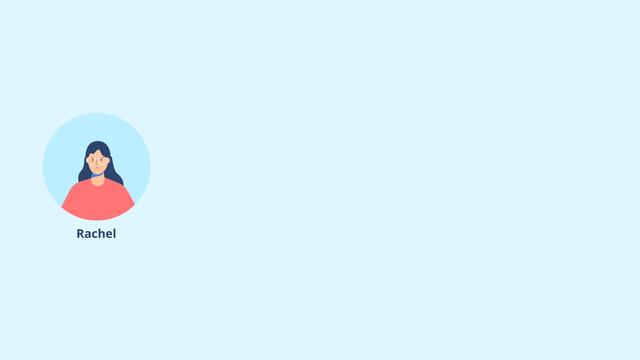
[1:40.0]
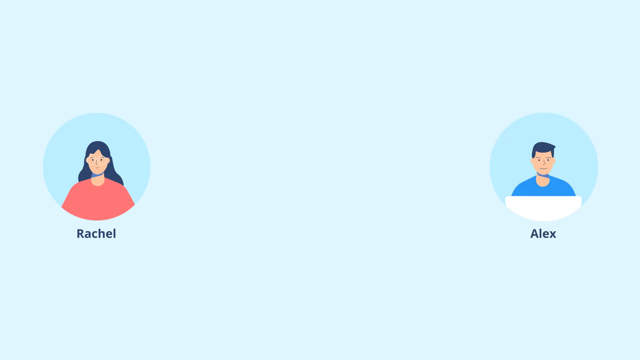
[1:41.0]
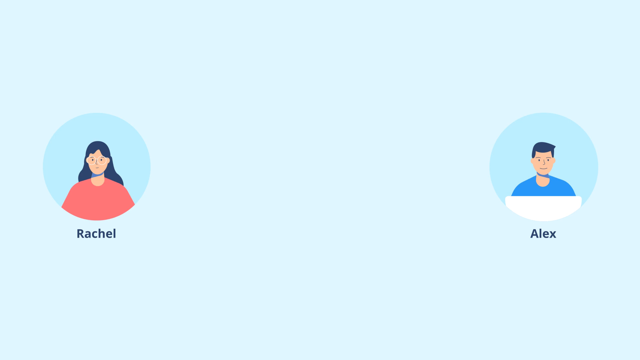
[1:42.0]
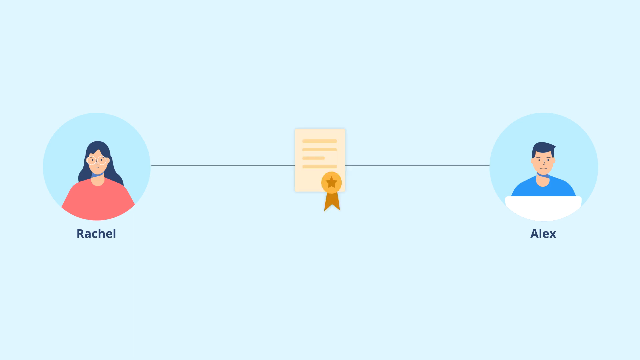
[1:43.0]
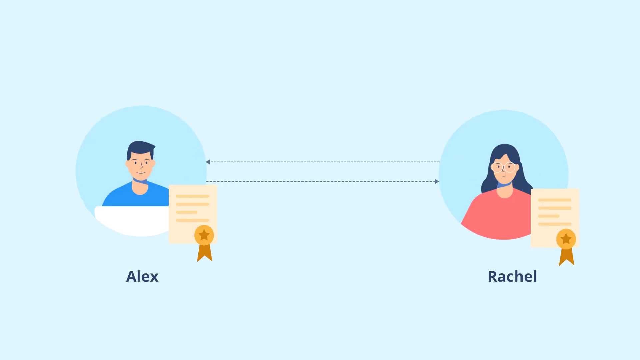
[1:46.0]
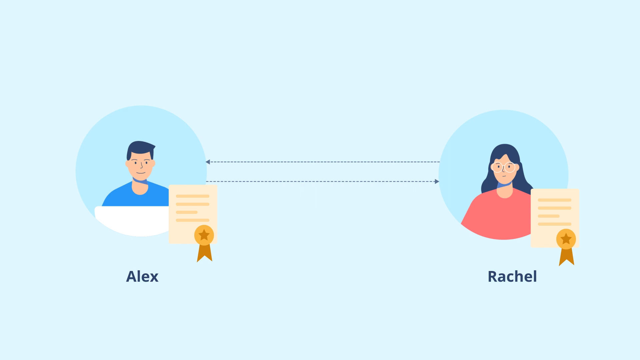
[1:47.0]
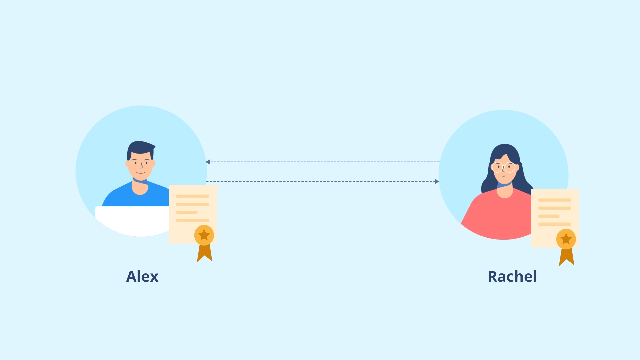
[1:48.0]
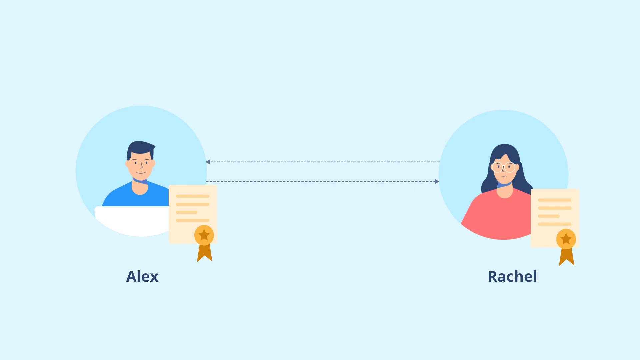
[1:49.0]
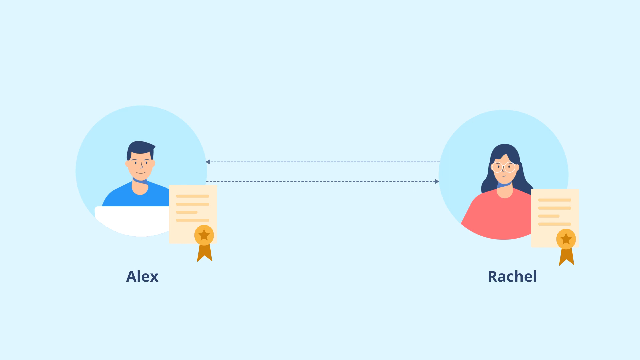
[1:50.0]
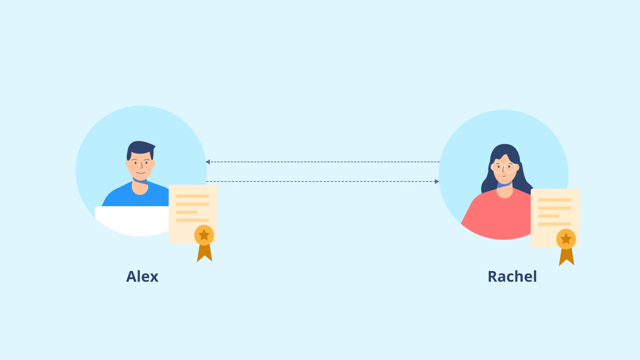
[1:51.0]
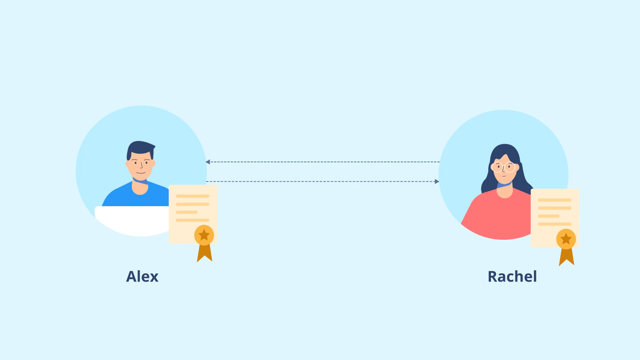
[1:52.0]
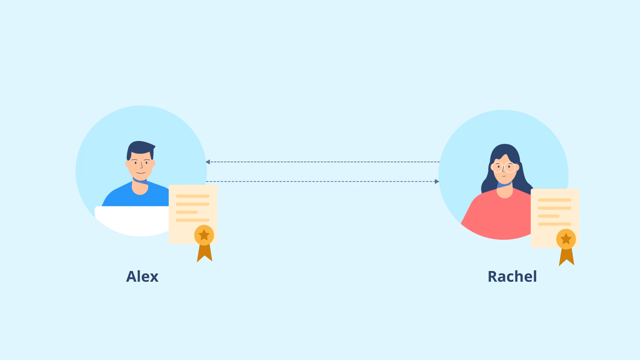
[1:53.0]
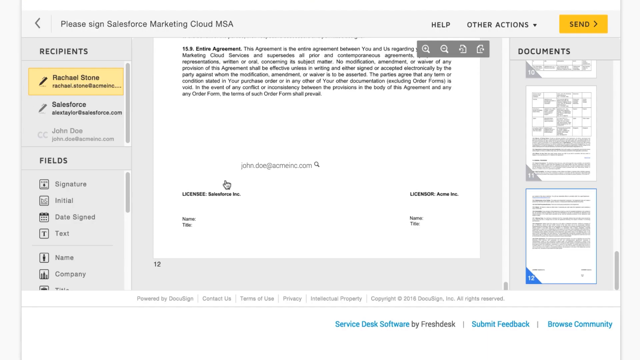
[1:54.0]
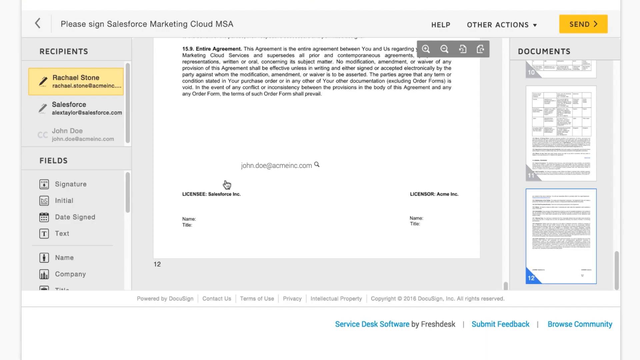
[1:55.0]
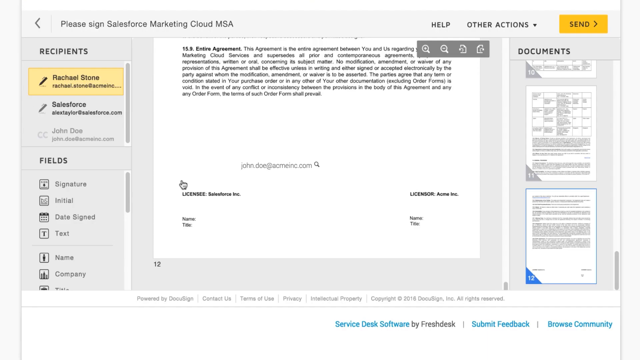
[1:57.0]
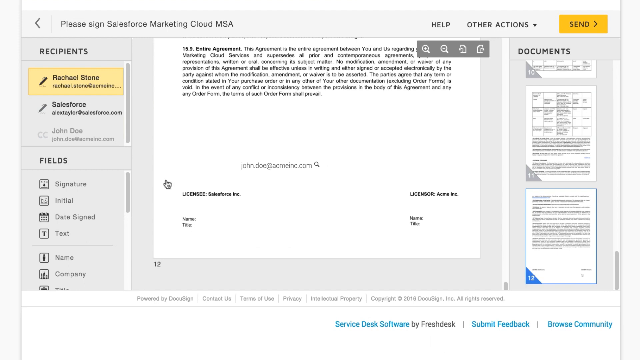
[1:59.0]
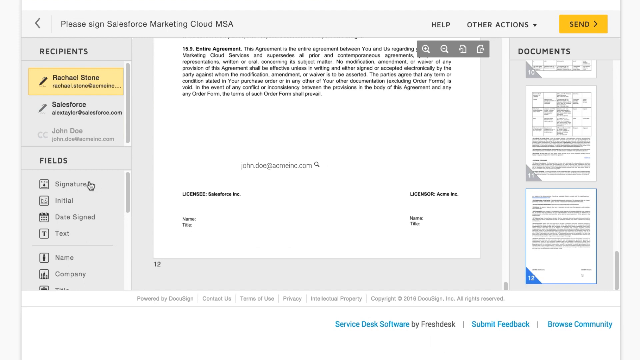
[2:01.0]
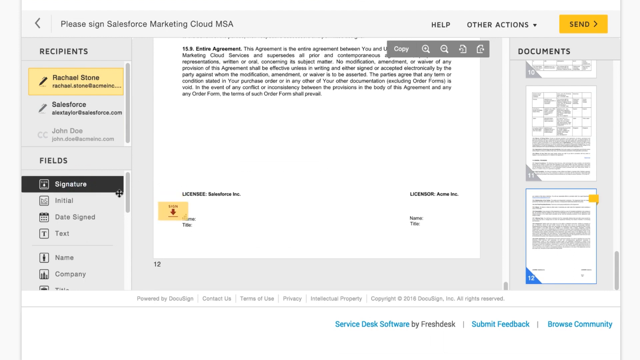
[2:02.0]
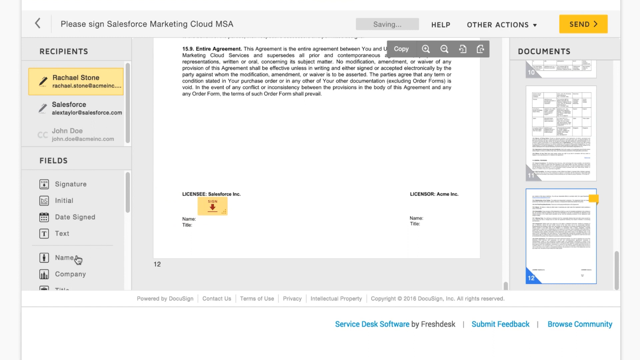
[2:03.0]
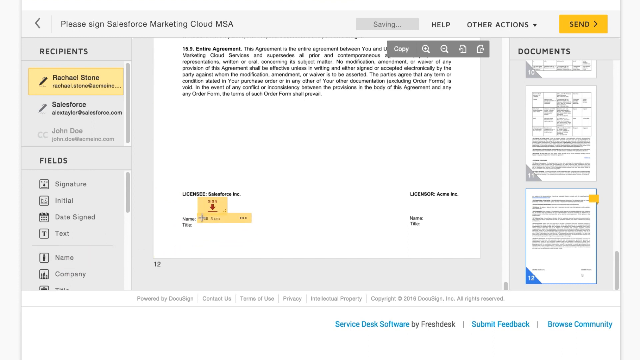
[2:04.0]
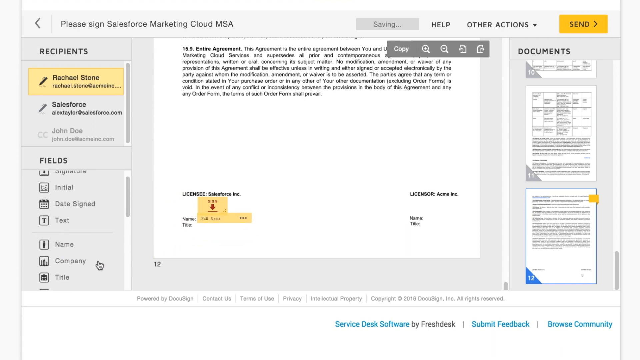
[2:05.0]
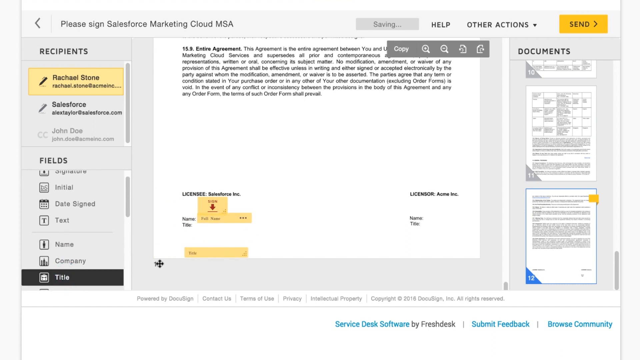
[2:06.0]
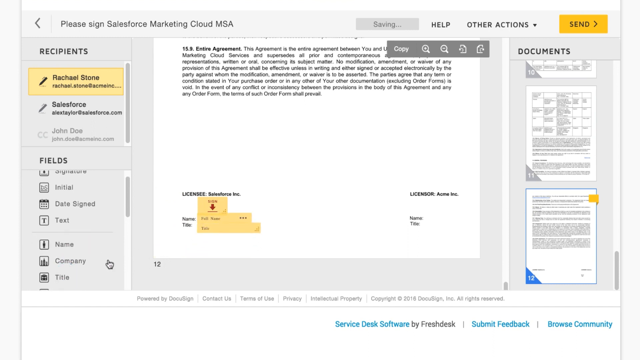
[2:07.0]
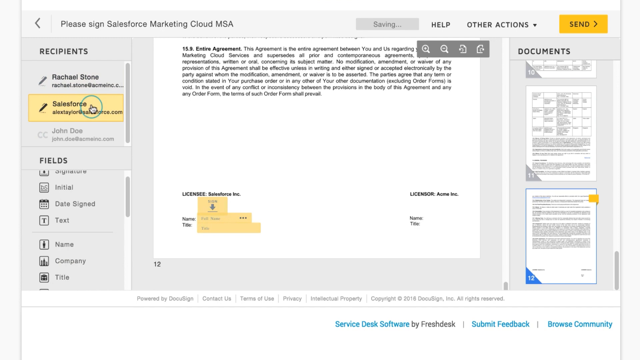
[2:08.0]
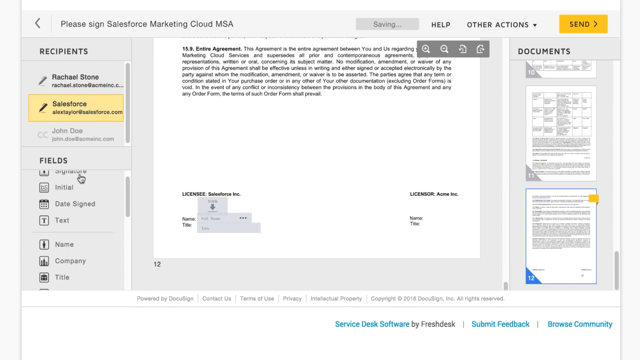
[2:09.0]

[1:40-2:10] Another figure, shaded blue, appears on the right side: Alex. A pink contract with a gold ribbon in the middle links Rachel and Alex, and the two exchange the contract so that both now have one. The DocuSign app is then shown, reading "please sign Salesforce Marketing Cloud MSA." A document is on the main page, with space for a signature at the bottom left and bottom right; under Signature are name, title and signature. On the right side is a document option to preview different documents. On the left side are settings such as field, signature, initial, date signed, text, name and company, along with the recipient. The user hovers over the document in the middle, clicks on the signature, and drags fields from the left side onto the document.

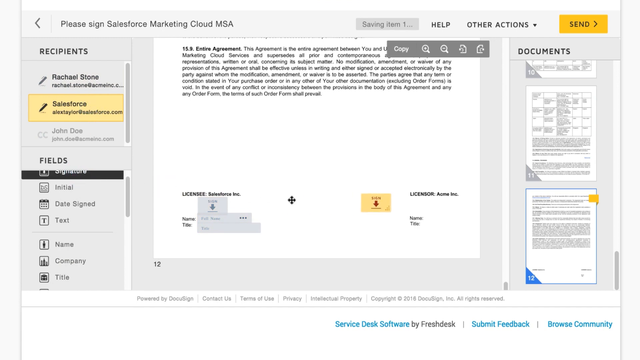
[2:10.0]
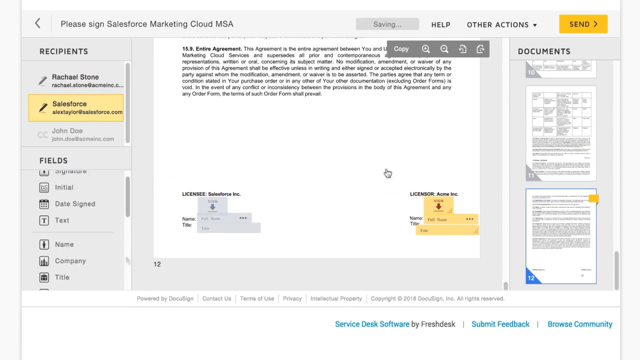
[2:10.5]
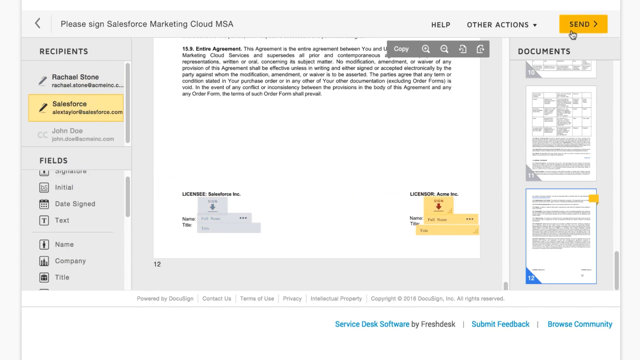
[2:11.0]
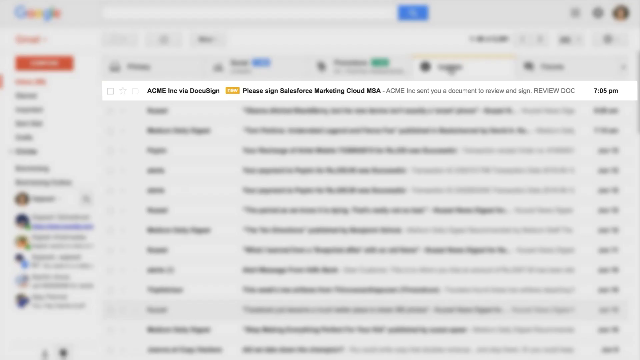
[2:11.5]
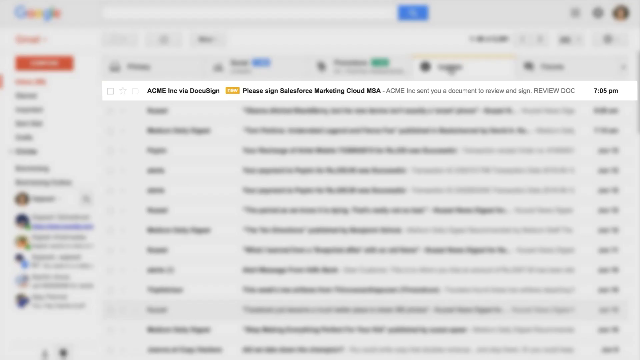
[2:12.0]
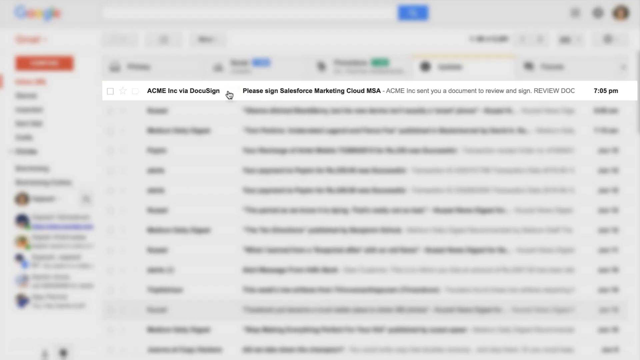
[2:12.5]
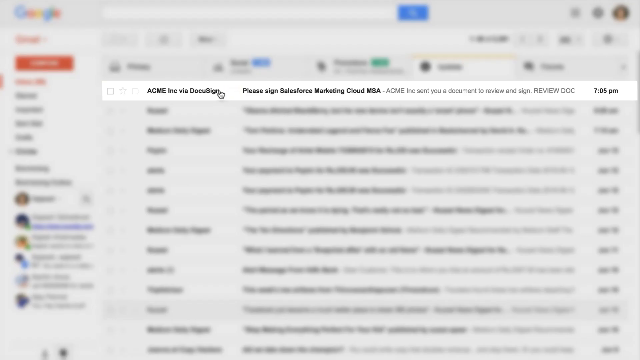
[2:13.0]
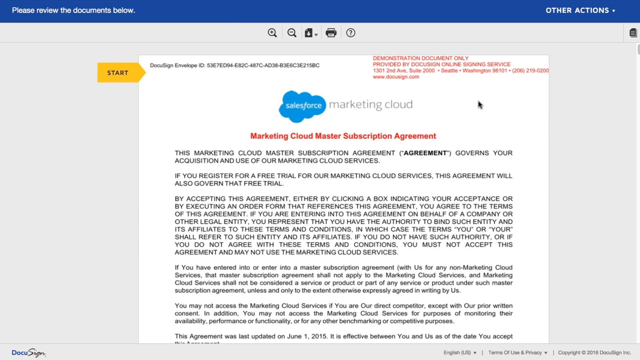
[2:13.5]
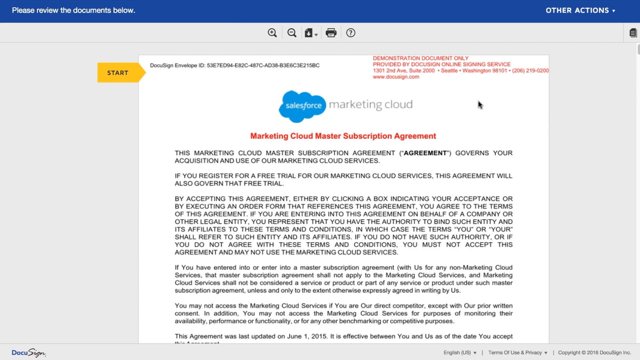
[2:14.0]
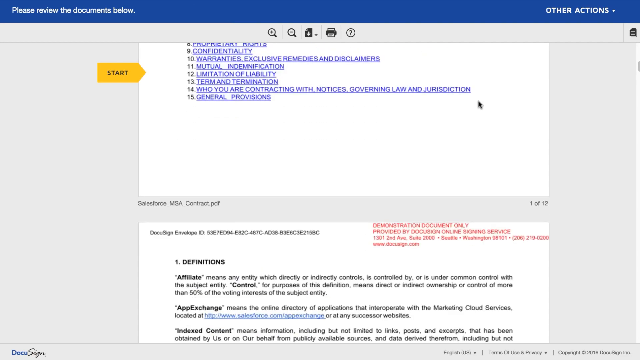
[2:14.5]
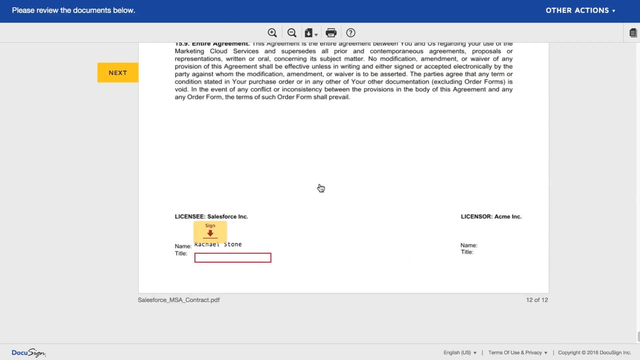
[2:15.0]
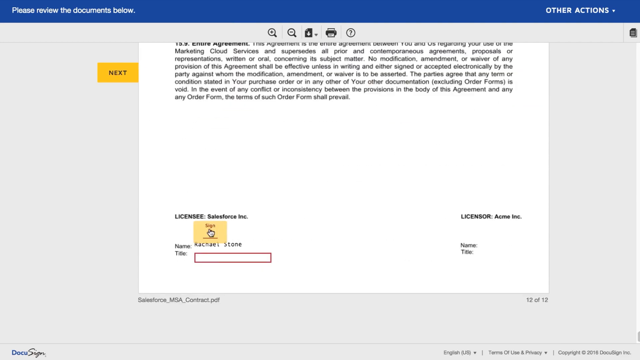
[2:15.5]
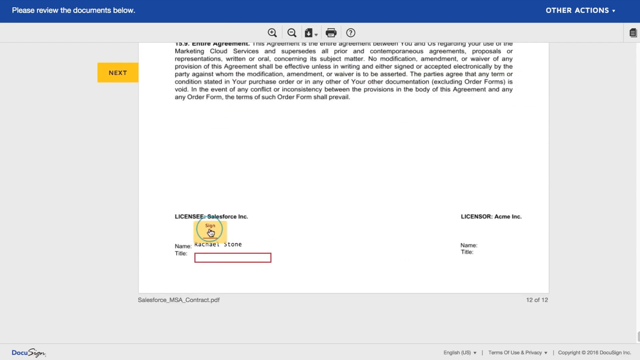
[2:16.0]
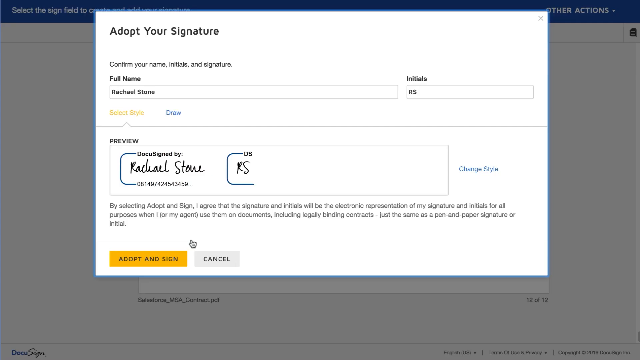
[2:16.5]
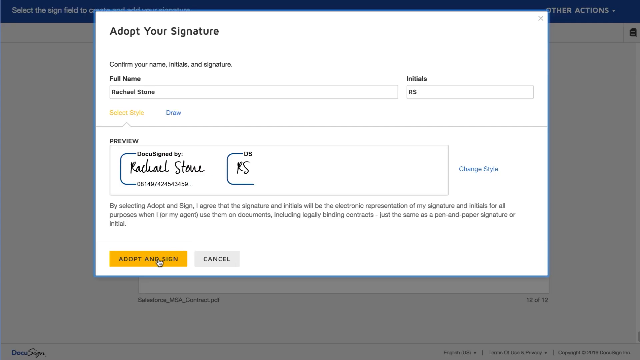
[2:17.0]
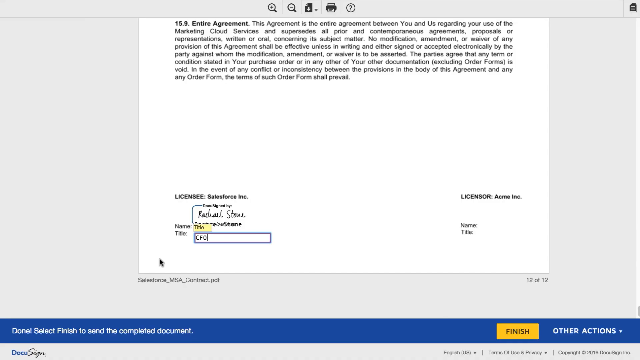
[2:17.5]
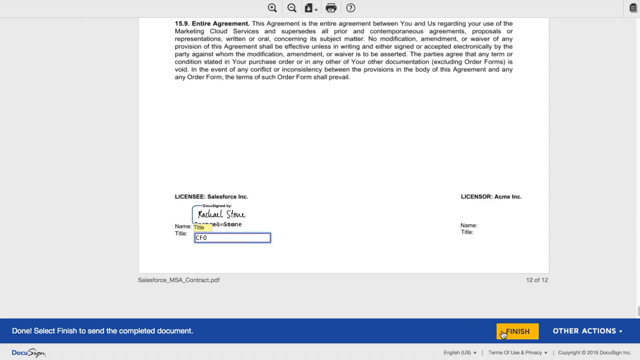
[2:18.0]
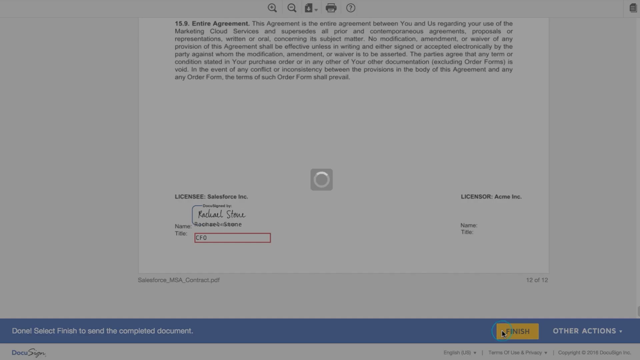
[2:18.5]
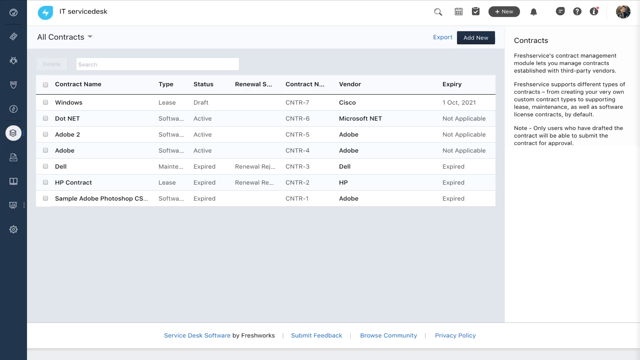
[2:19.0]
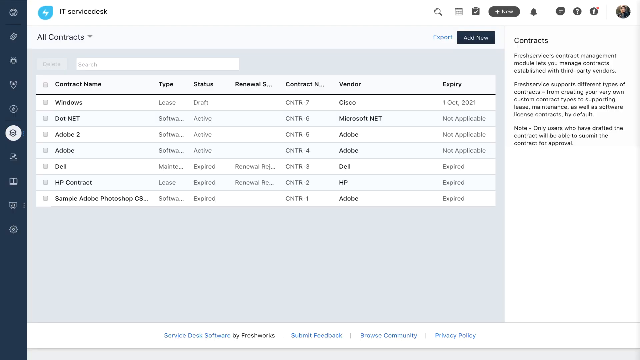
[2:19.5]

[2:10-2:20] After reading the document, the user presses the Send button in the top right corner of the app. Gmail appears with one email highlighted, reading "please sign Salesforce Marketing Cloud MSA," the email requesting the signature. The document is shown, and the user scrolls to the bottom, where a signature button labeled "Download" is used to edit the signature from saved signatures. The person's signatures are shown, with an "Adopt and Sign" button at the bottom. The user clicks it, and the signature appears embedded in the document, indicating it has been signed.